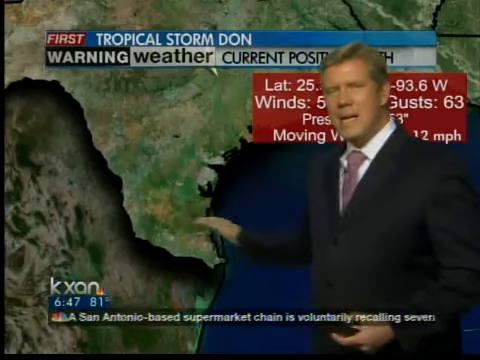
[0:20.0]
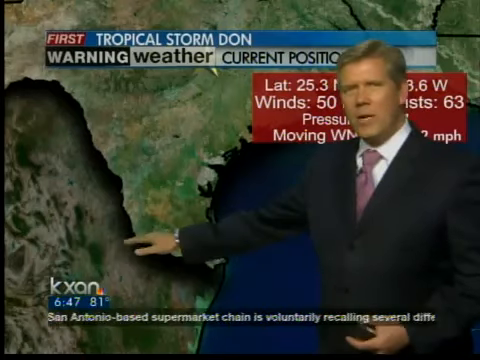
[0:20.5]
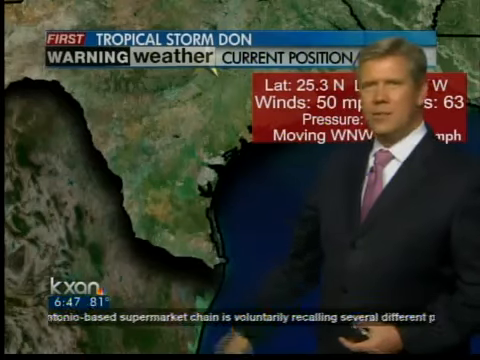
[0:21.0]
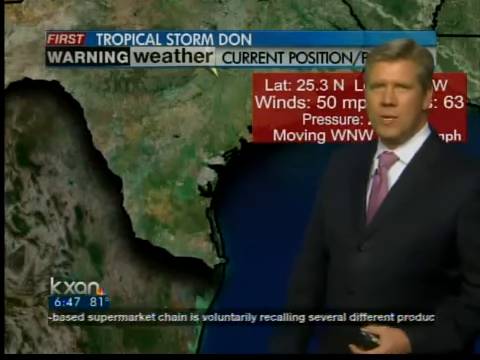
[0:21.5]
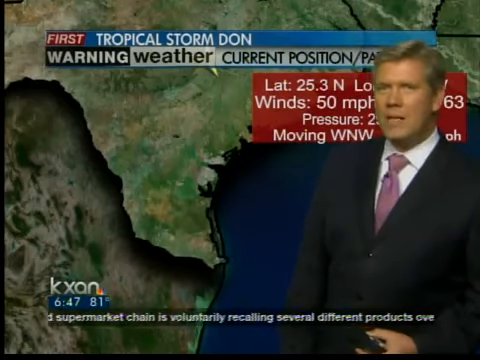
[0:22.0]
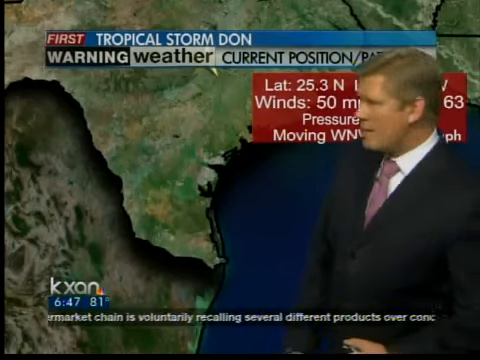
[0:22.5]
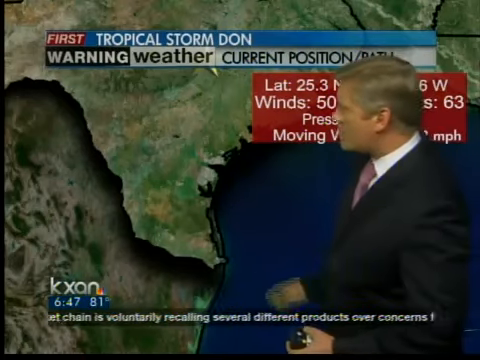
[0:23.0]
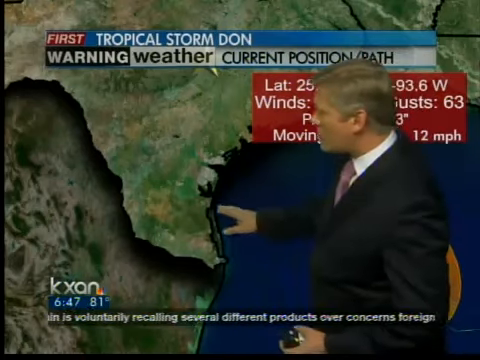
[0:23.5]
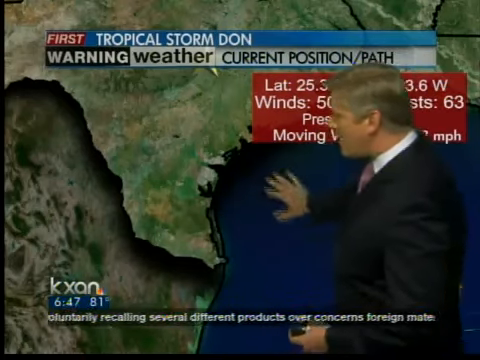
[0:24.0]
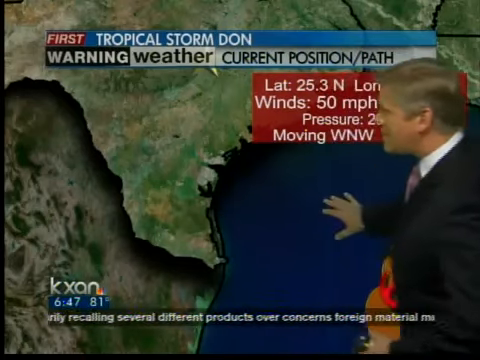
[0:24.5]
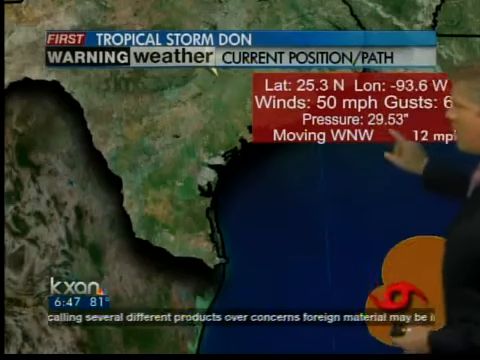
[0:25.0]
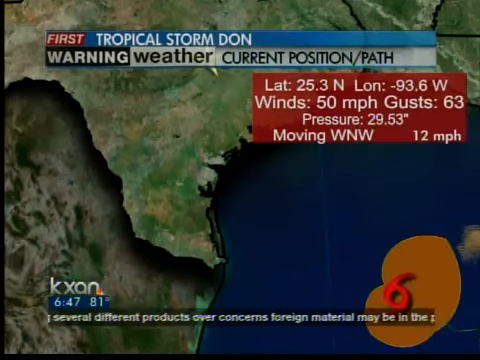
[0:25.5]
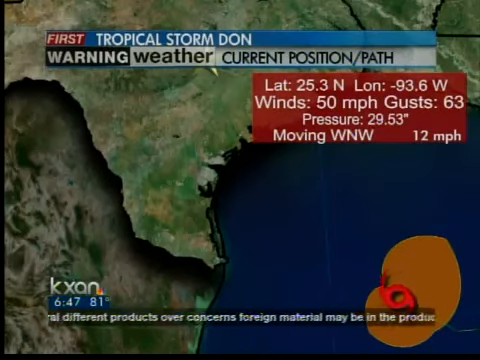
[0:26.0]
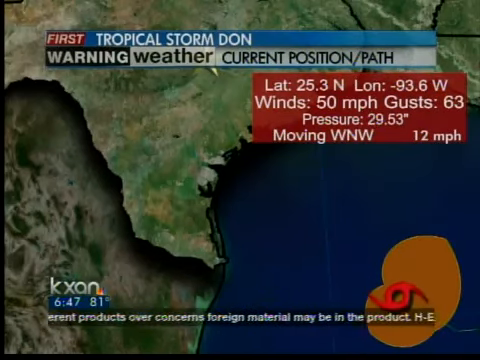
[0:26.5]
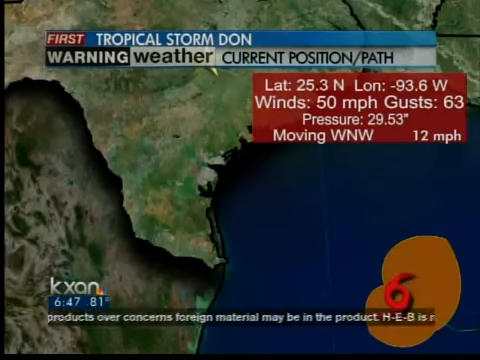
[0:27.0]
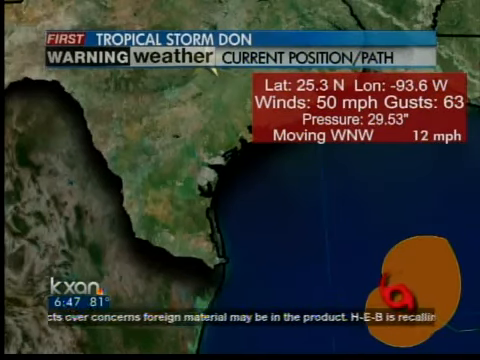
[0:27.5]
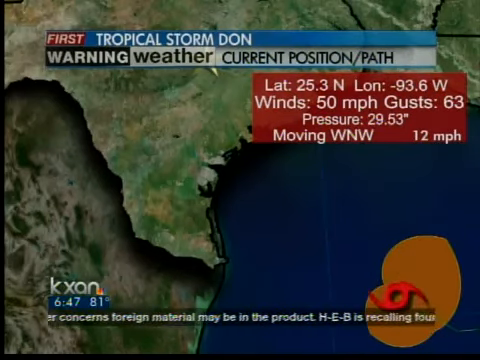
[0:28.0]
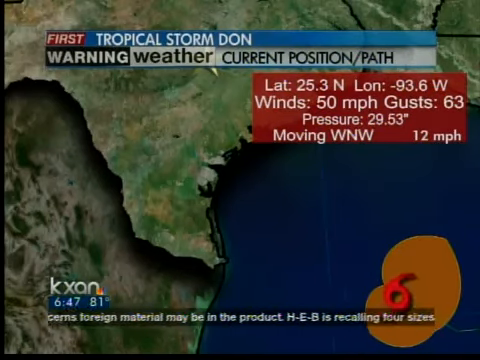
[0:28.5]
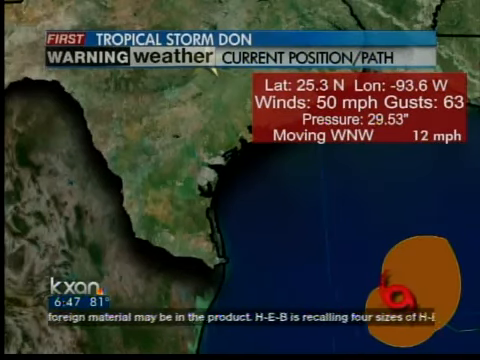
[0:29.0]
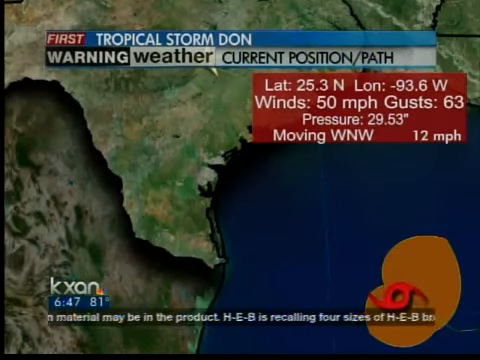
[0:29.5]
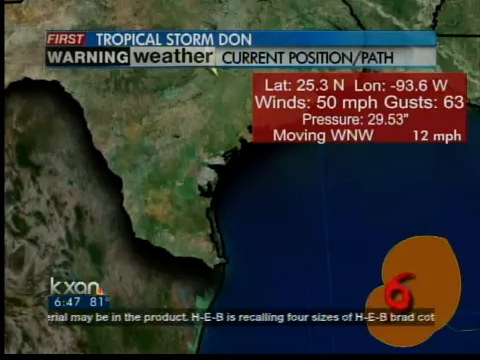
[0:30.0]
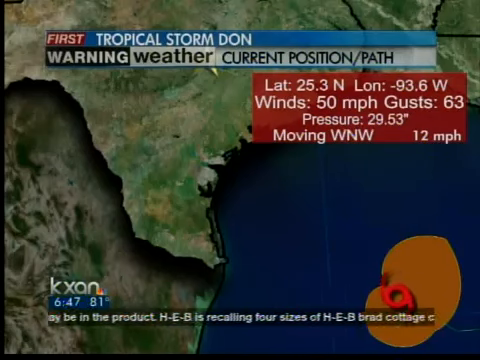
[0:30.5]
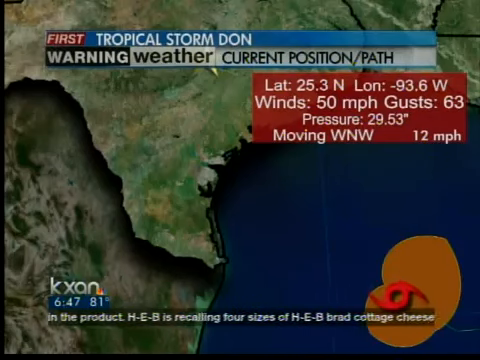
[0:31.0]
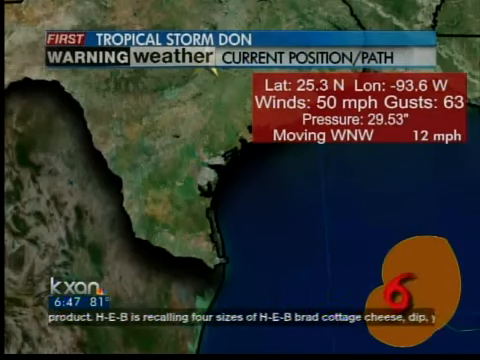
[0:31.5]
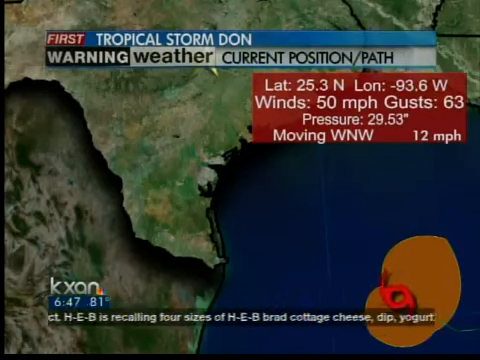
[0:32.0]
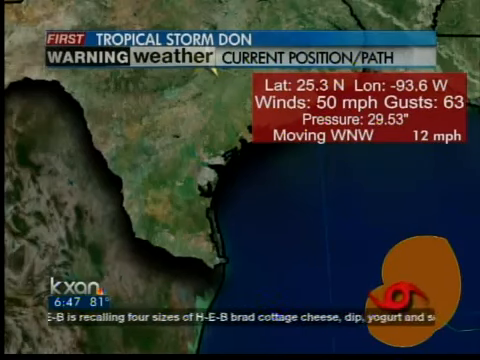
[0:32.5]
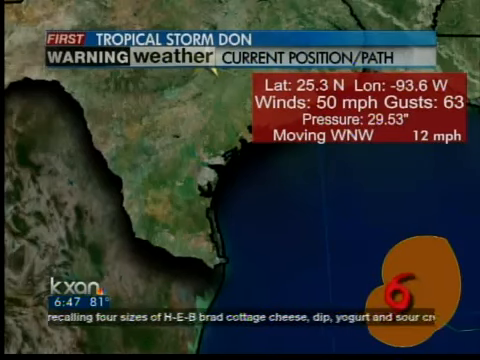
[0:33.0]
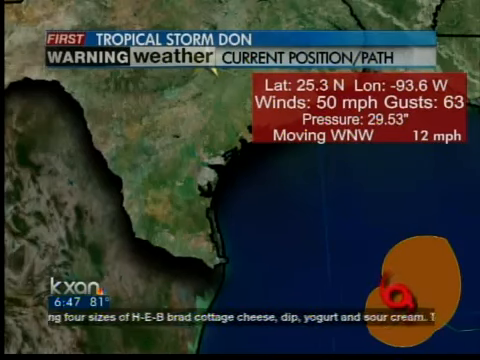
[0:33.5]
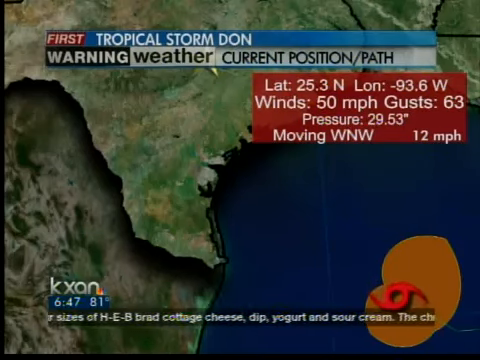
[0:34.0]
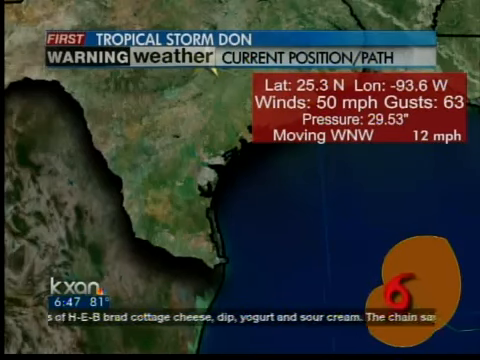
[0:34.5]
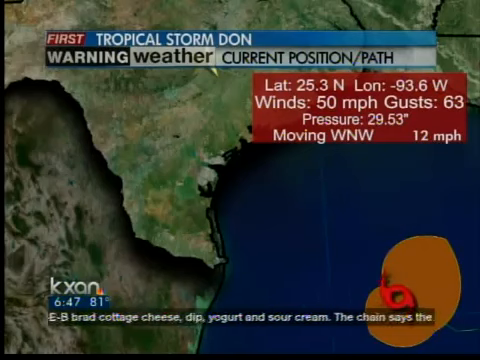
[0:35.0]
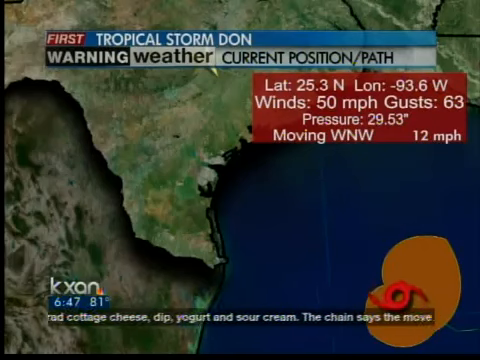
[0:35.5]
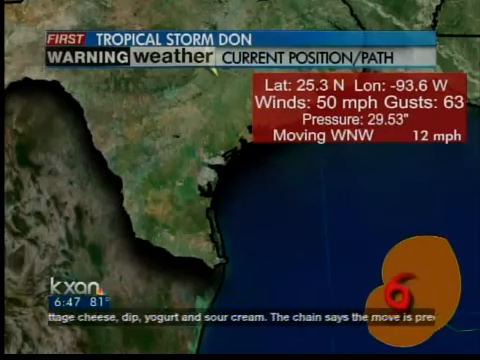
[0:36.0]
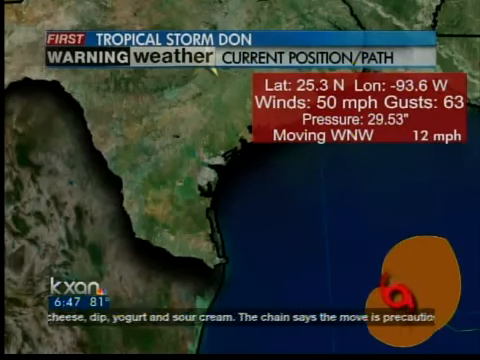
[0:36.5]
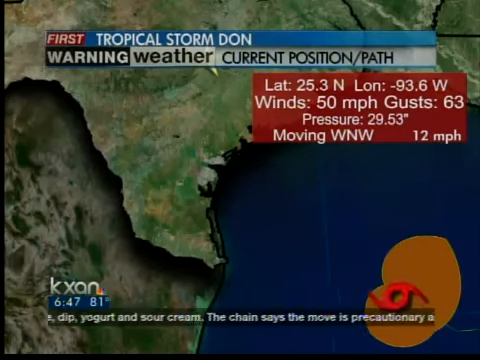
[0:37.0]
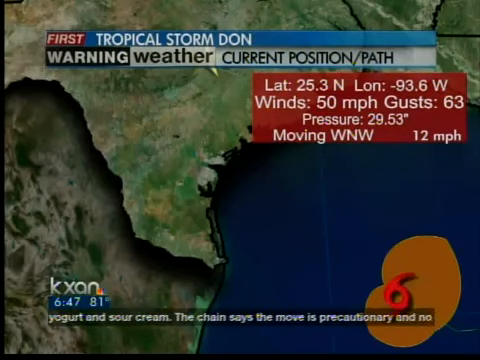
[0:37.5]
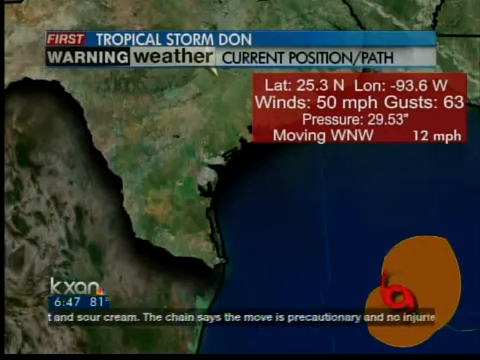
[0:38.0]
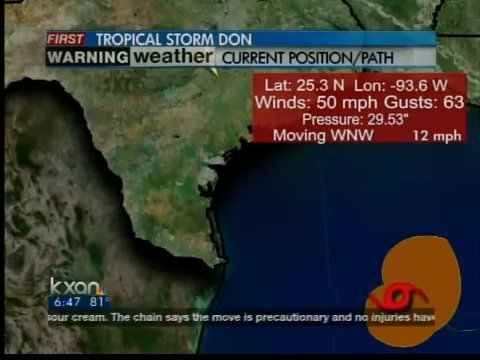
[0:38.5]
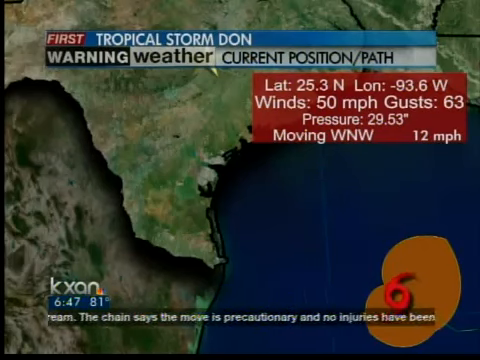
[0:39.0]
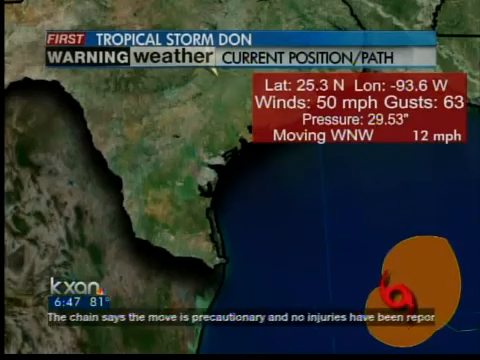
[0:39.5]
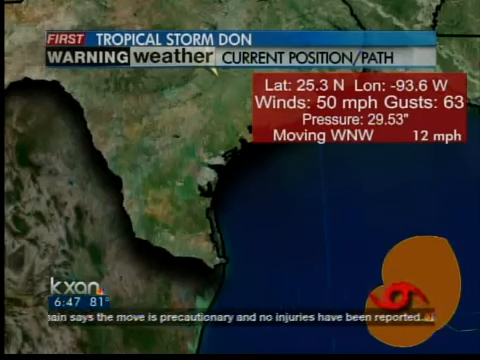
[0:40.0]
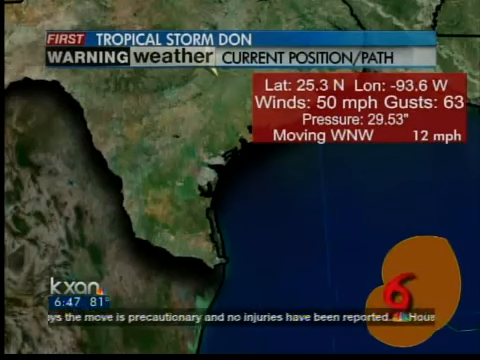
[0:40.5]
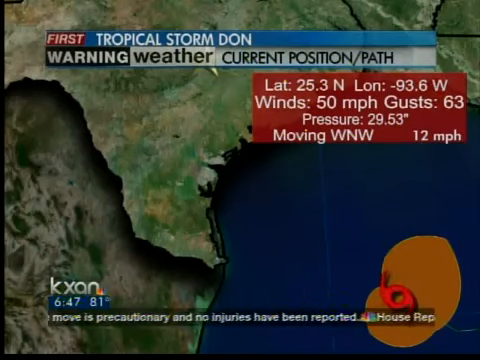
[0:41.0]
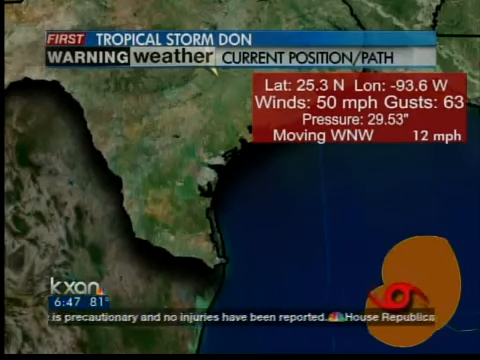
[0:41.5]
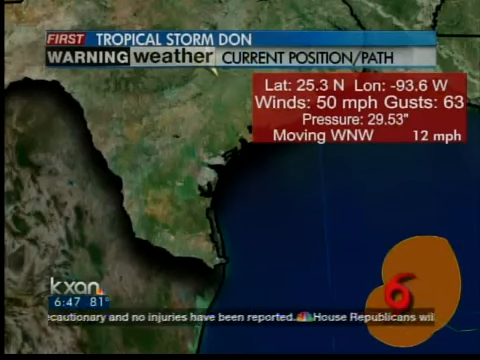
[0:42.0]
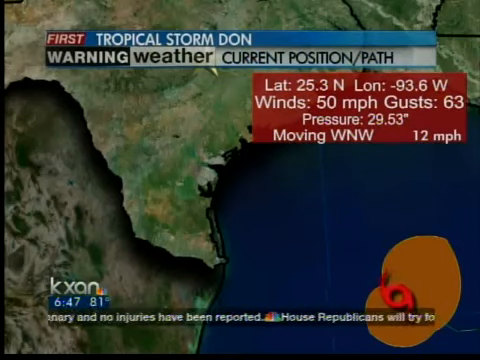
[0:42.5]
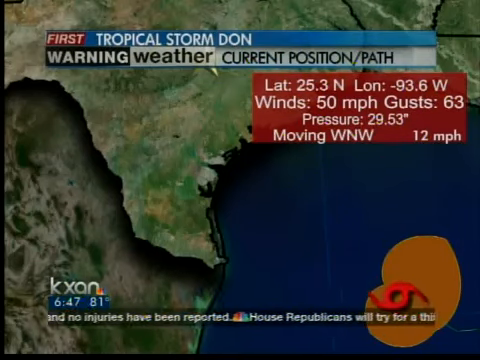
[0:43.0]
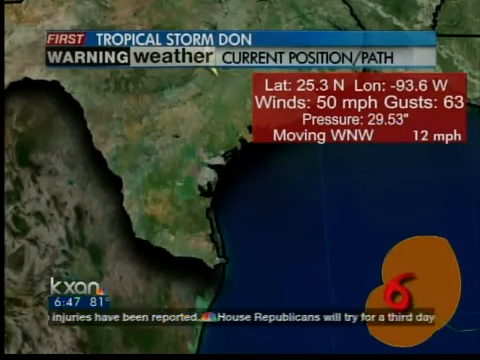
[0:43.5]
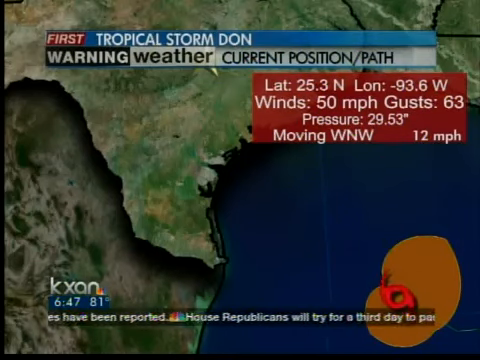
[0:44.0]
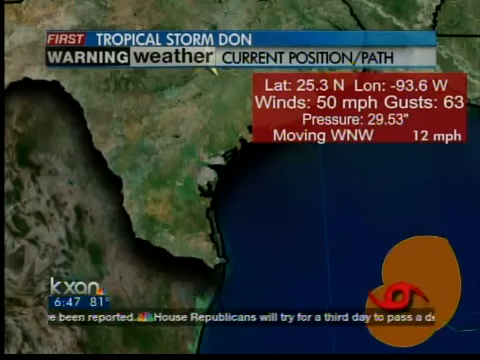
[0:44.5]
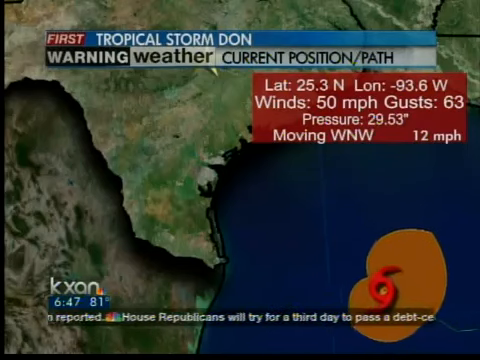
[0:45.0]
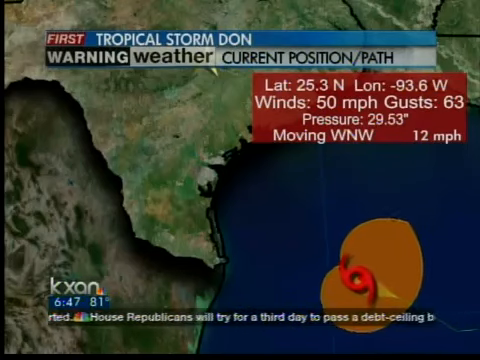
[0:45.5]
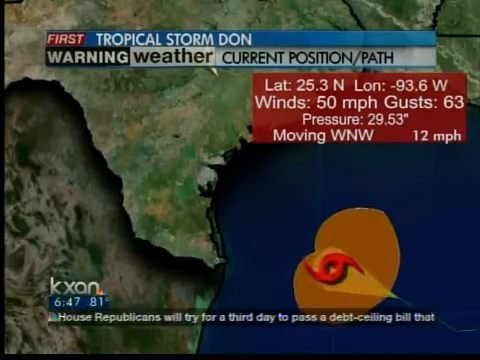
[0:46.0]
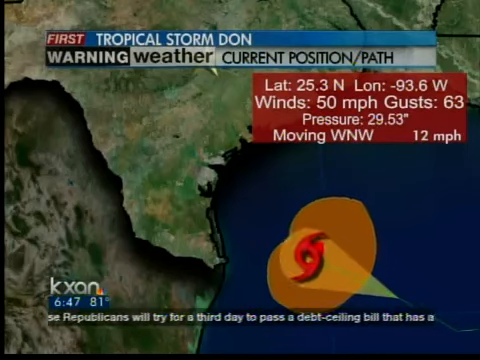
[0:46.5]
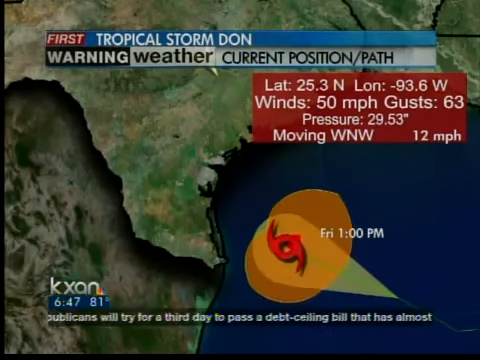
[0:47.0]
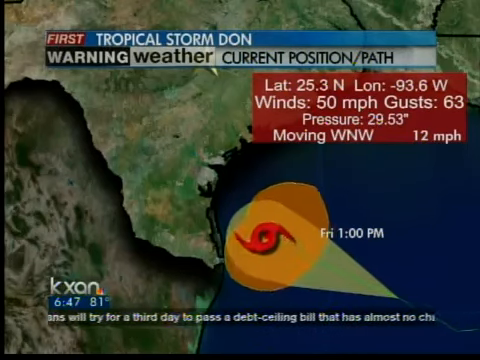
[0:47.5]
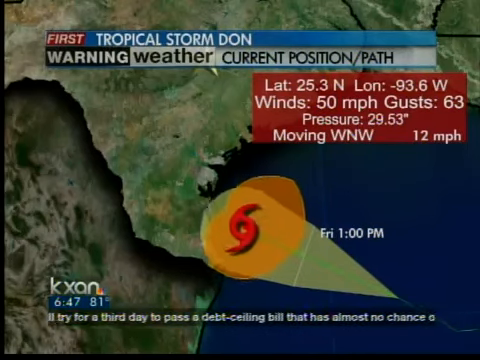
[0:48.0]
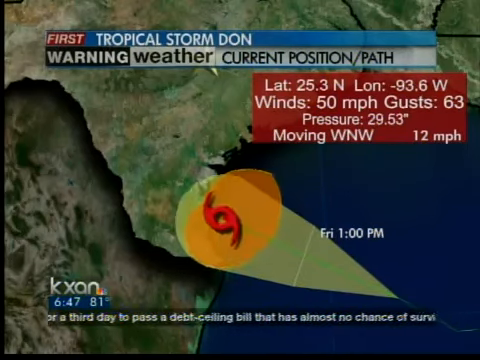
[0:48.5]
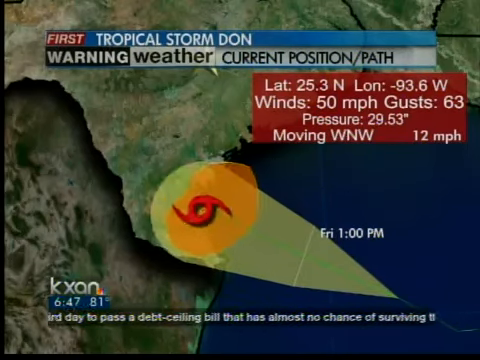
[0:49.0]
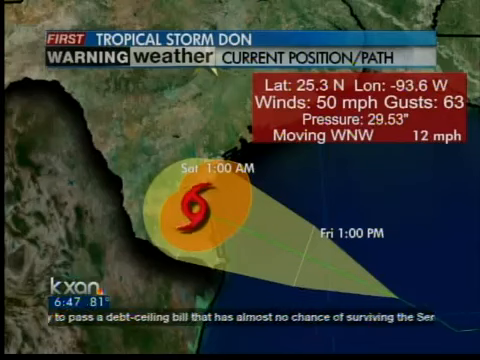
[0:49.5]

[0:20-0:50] The weatherman makes a wavy motion with his hand near the tip of Texas and moves it across. He puts his hand down, looks at the viewer for a moment while speaking, then looks back at the map. With his hand spread out, he moves it across the ocean. This reveals the rest of the red info panel on the upper right, which lists statistics such as latitude, longitude, wind speed, air pressure, and wind direction. Also revealed behind him, on the lower right, is a strange brown shape that looks kind of like a peach. On top of it is a very simplified red hurricane symbol spinning counterclockwise. Below, the news scroller continues; it says something about a recall of cottage cheese and yogurt. Then it shows a small NBC logo and news about House Republicans trying to pass a debt ceiling bill. The orange shape with the hurricane symbol moves diagonally up and to the left. It looks like it is being projected at the end of a ray of light, like a spotlight, and pushed along by that projection in a cone shape. The words "Fri 1:00 p.m." appear in white to the right of the symbol. The shape and hurricane symbol stop at the bottom tip of Texas, and the words "Sat 1:00 a.m." appear next to them in white.